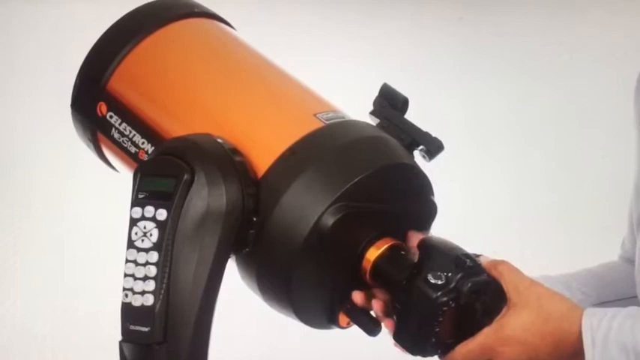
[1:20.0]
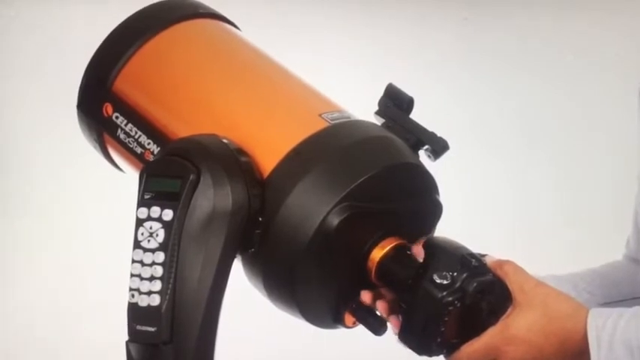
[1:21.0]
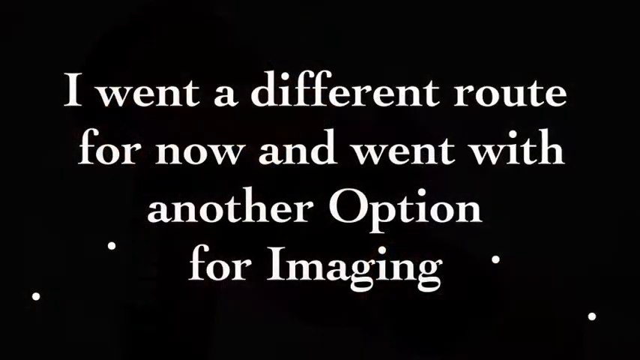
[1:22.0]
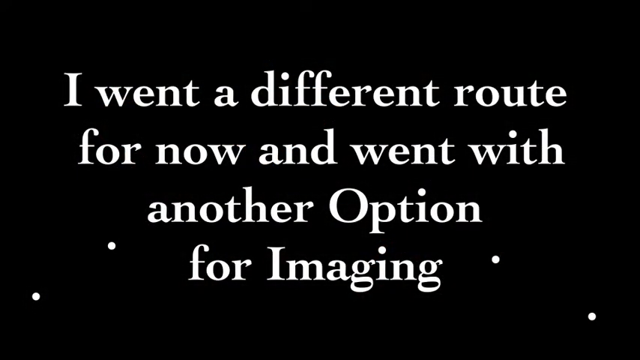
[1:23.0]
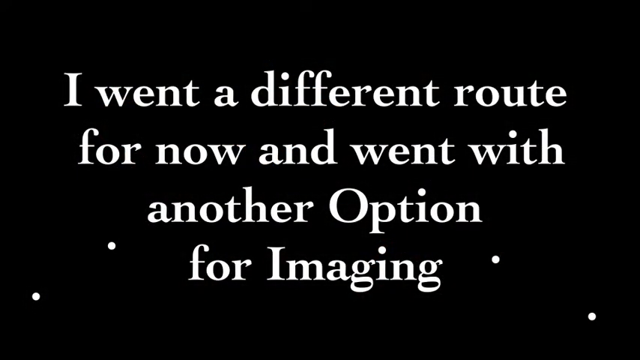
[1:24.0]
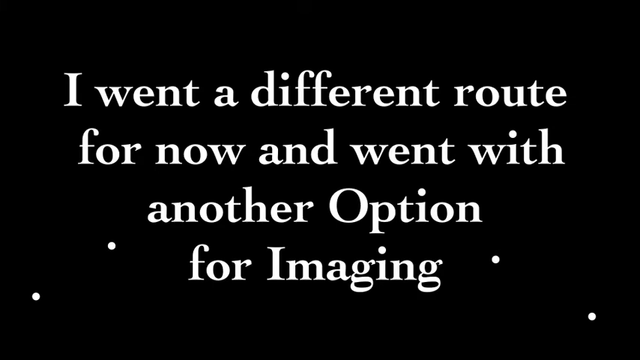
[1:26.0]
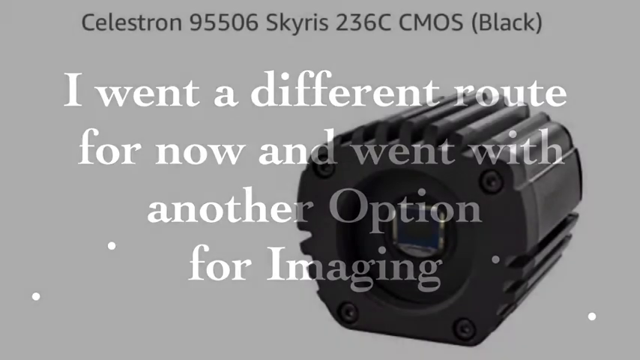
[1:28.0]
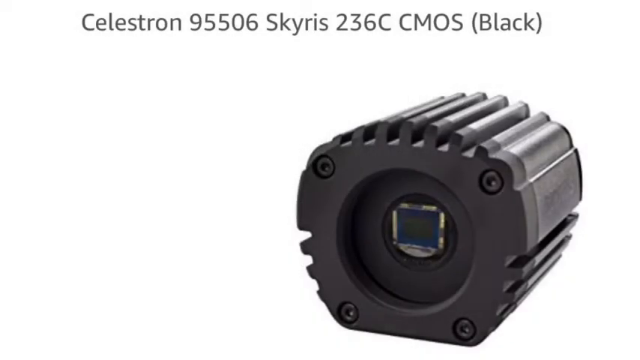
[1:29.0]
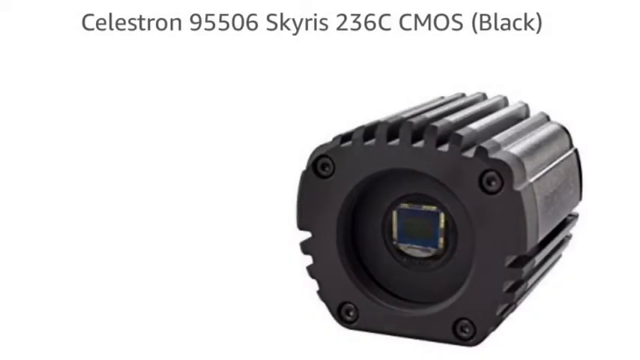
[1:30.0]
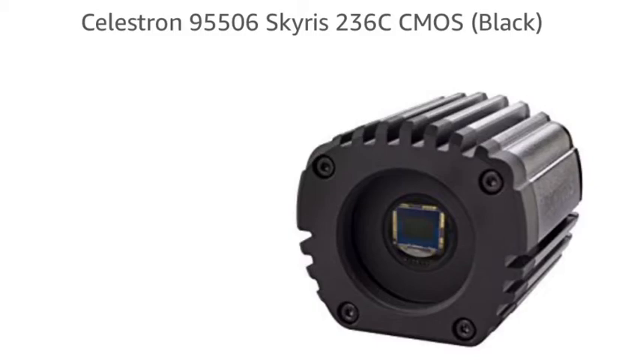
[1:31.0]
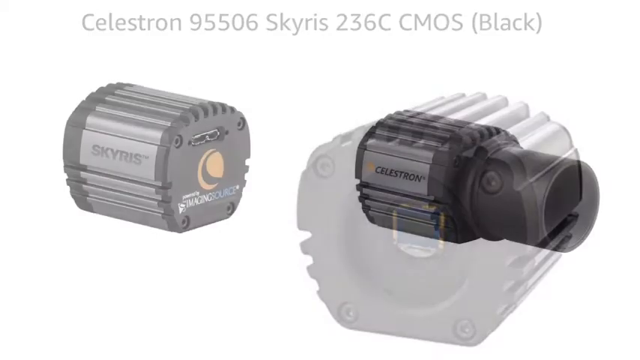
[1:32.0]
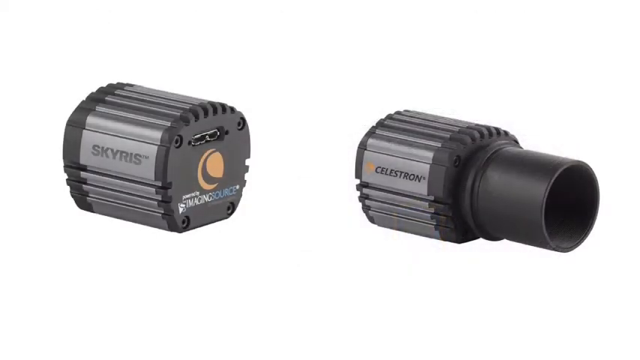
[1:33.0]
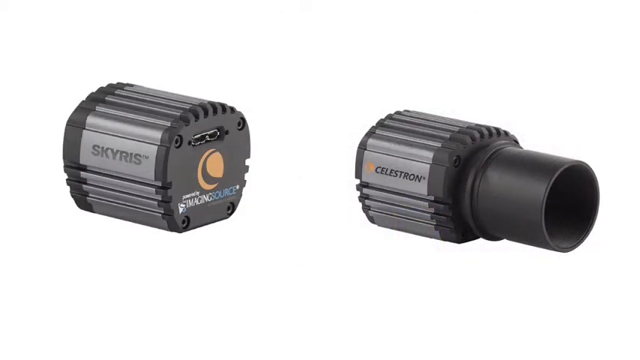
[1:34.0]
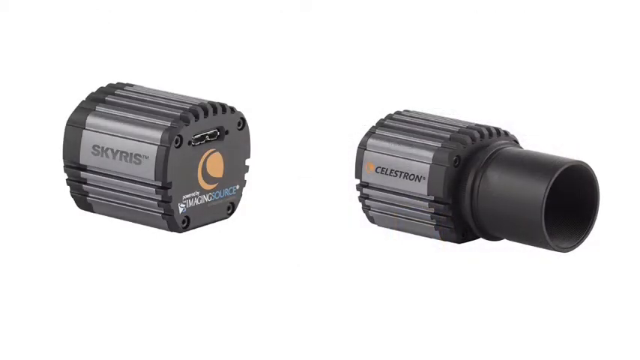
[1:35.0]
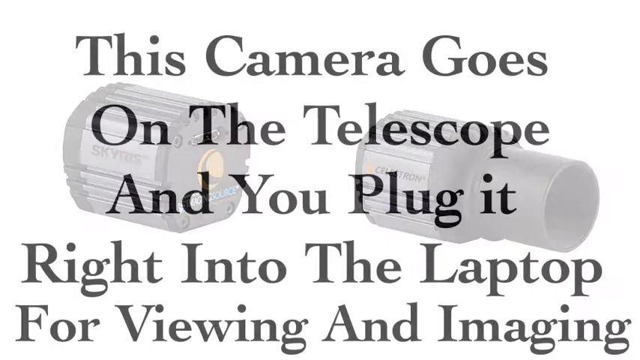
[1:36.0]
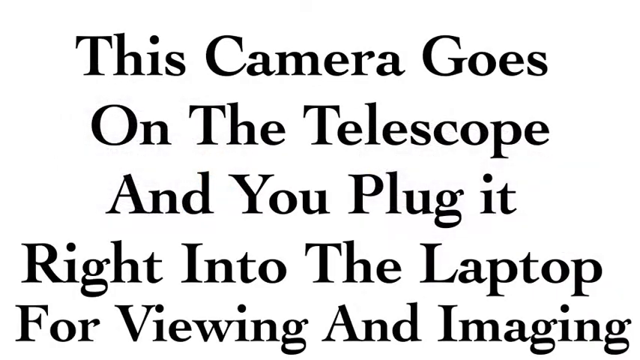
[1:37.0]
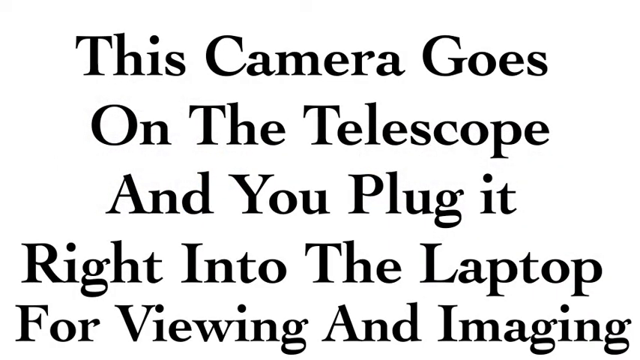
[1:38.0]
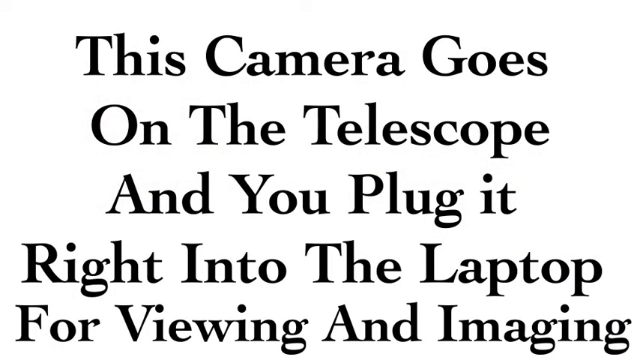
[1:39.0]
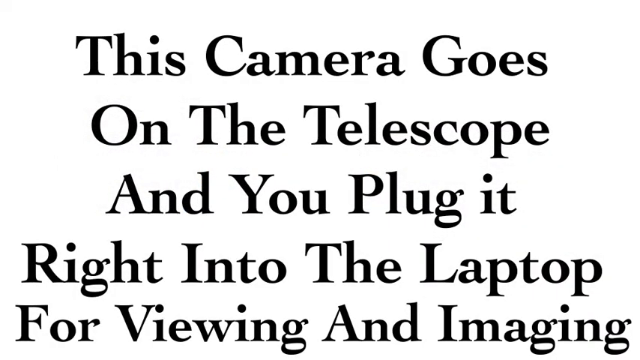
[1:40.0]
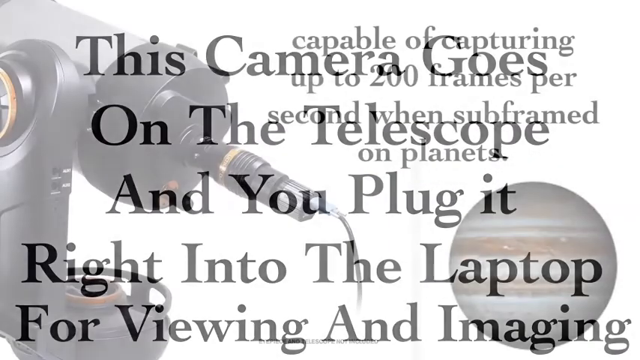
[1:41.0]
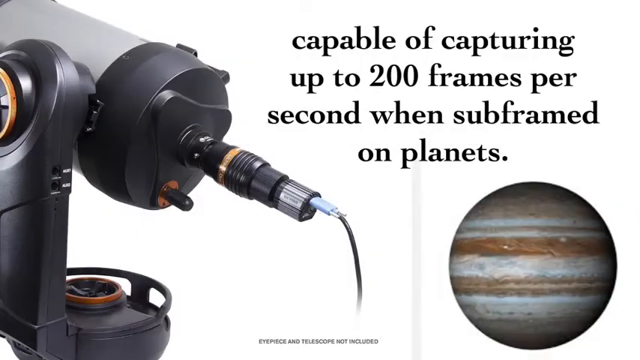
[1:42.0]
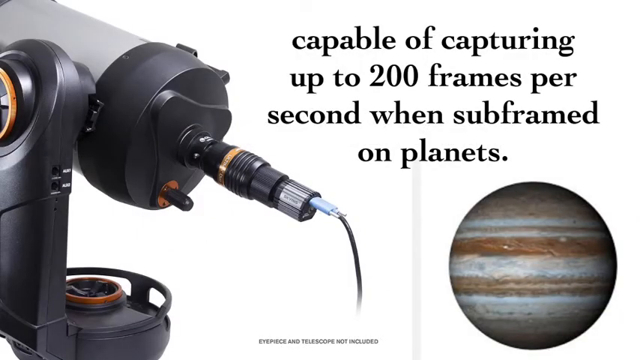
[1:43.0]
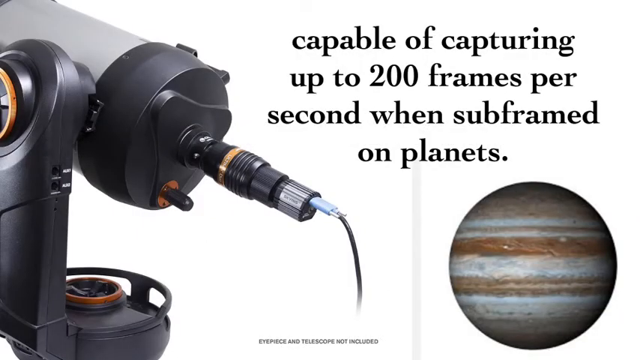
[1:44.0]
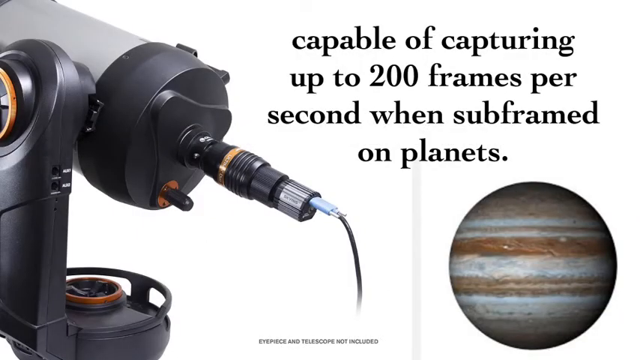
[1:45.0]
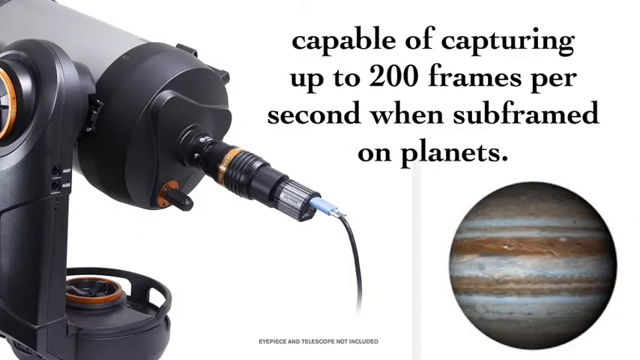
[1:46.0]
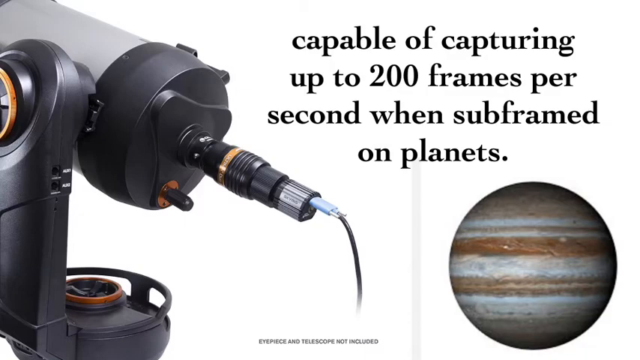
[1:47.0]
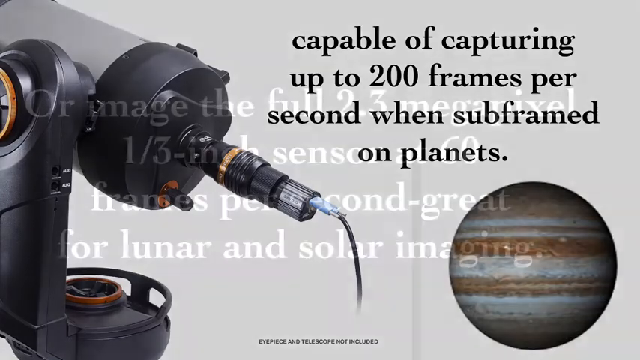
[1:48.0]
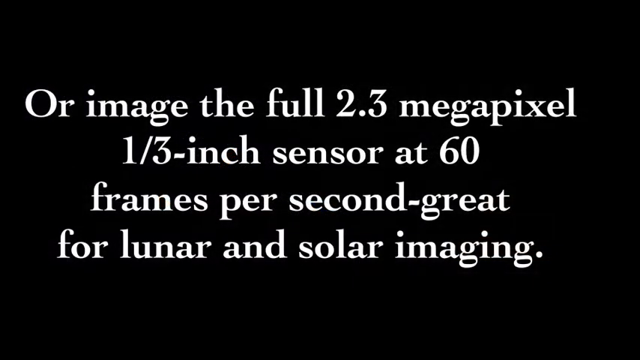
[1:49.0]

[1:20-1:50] An orange and black Celestron Next Star has a thing on its side that looks like a remote or a receiver, with white buttons including up, down, left and right arrows. A man with long white sleeves puts a part on the back of the Celestron, twisting it on. The video transitions to a black screen with white text that says "I went a different route for now and went with another option for imaging", and three little small circles appear on the screen. Next, a black object is shown on a white background with gray text above it beginning "Celestron 95506 Skyris 236C CMOS black". Another image shows more of these parts, with the Skyris on the left and the Celestron on the right. A white background then shows bolded black text that says "this camera goes on the telescope and you plug it right into the laptop for viewing and imaging". What is kind of an up-close example of what can be seen follows, with bolded black text at the top that says "capable of capturing up to 200 frames per second when subframed on planets" and the device sitting on the left. Then a black background shows bolded white text that says "or image the full 2.3 megapixel 1/3 inch sensor at 60 frames per second, great for lunar and solar imaging."